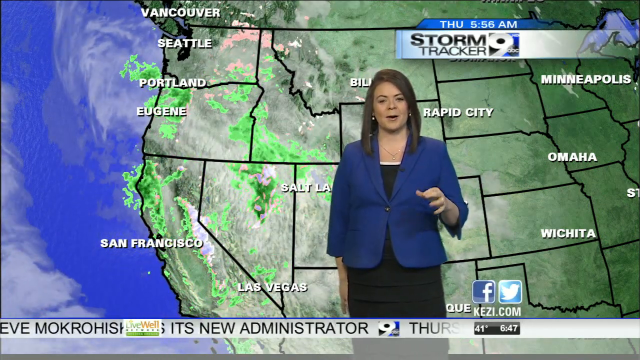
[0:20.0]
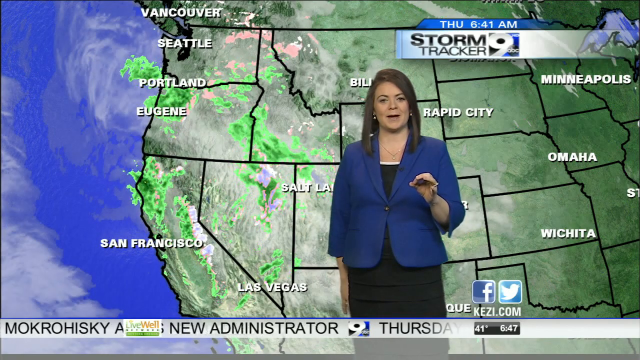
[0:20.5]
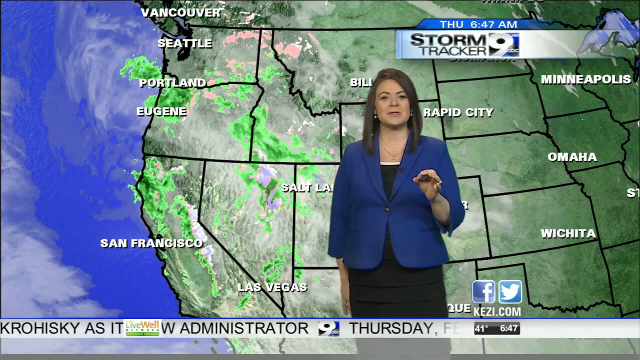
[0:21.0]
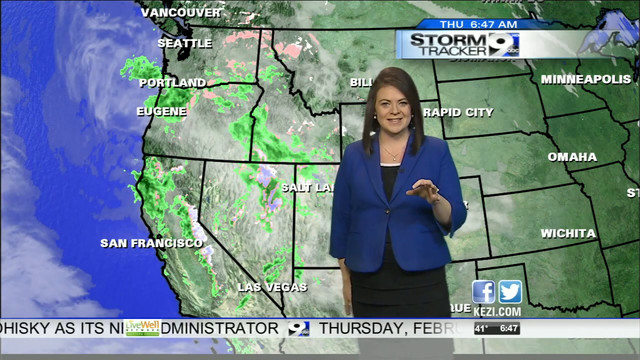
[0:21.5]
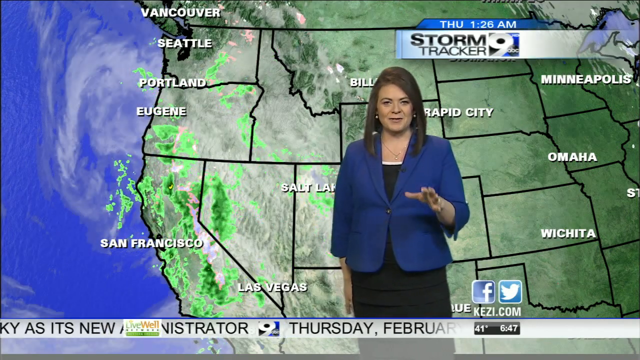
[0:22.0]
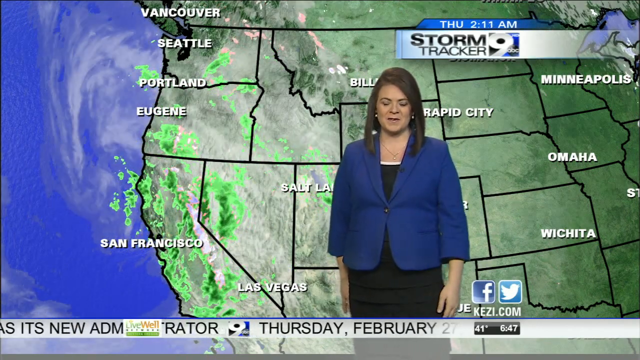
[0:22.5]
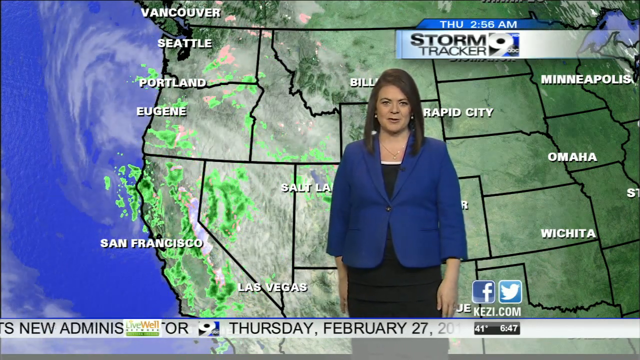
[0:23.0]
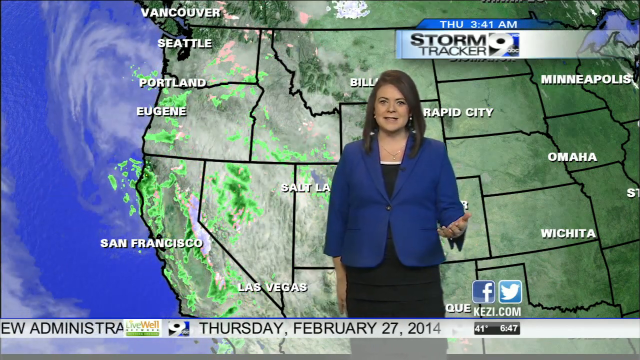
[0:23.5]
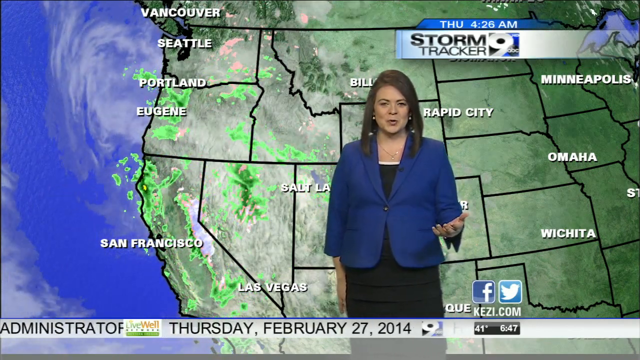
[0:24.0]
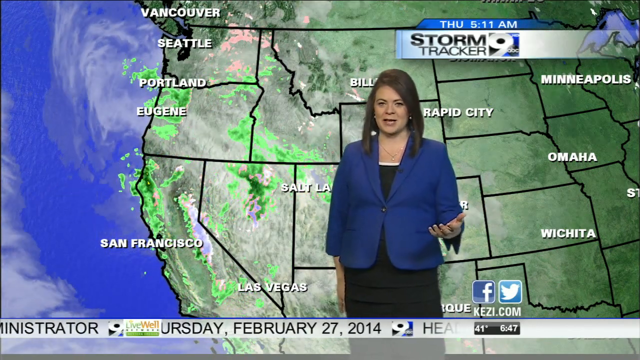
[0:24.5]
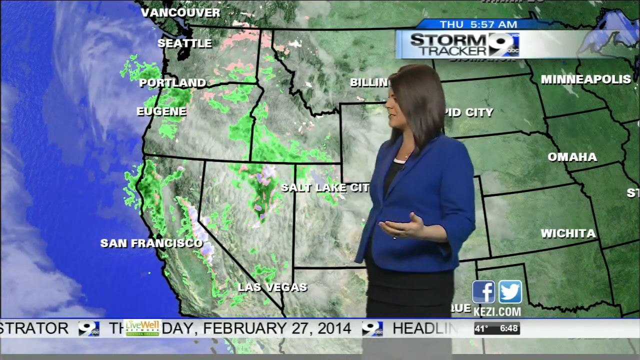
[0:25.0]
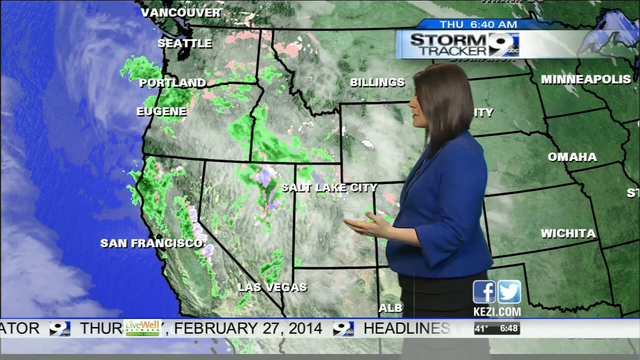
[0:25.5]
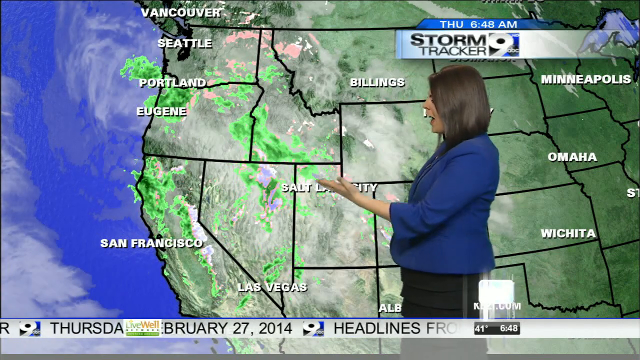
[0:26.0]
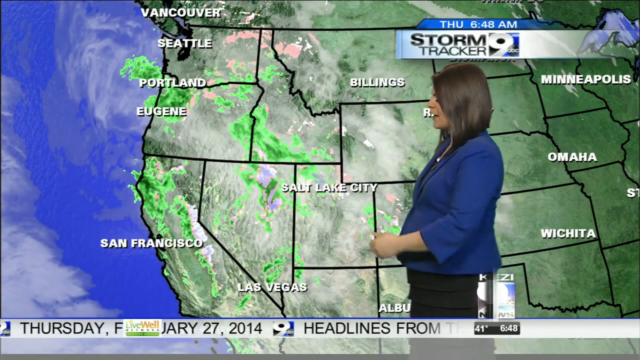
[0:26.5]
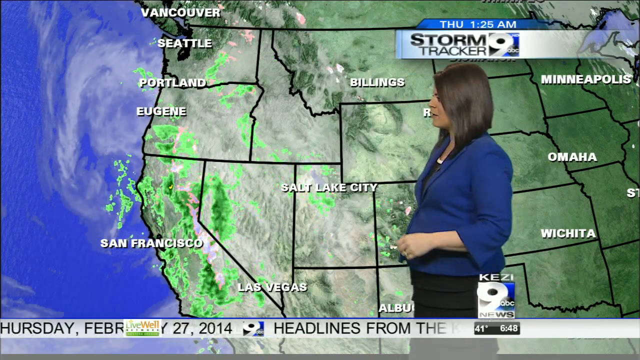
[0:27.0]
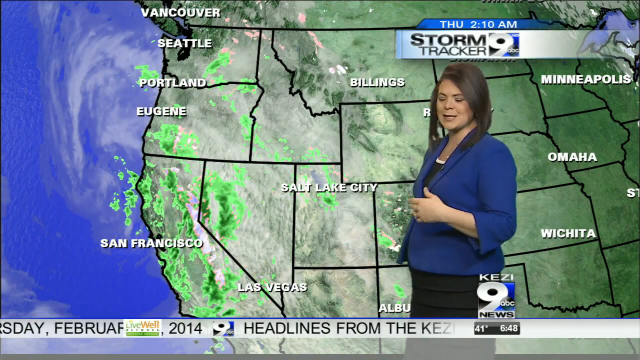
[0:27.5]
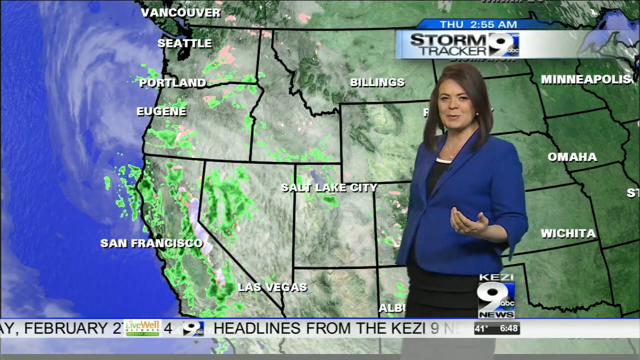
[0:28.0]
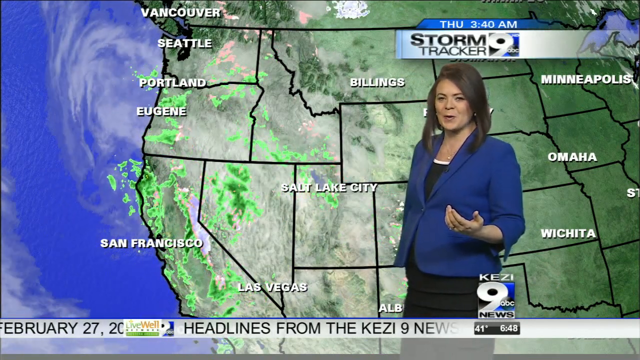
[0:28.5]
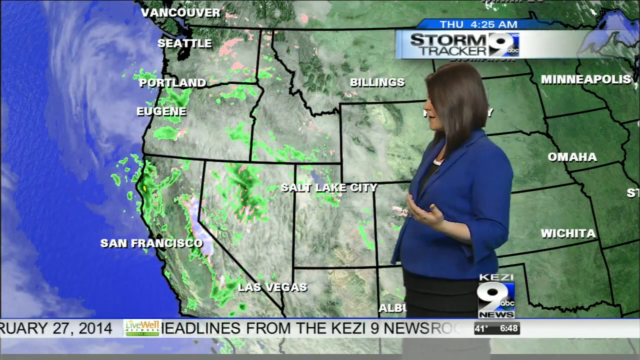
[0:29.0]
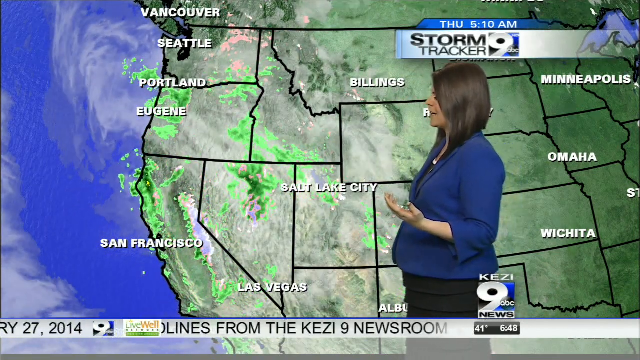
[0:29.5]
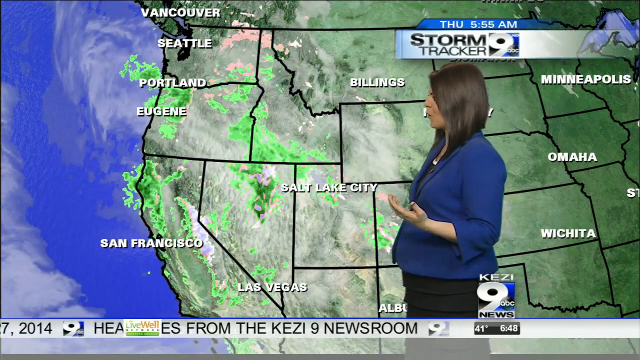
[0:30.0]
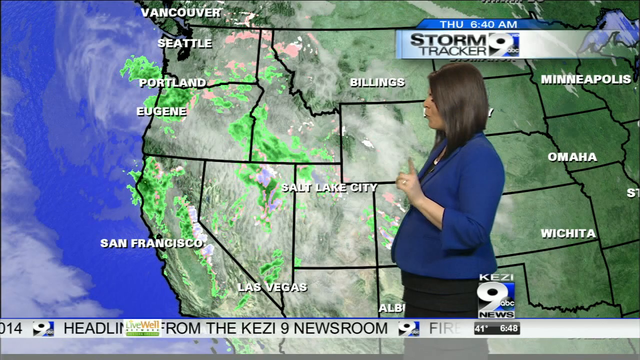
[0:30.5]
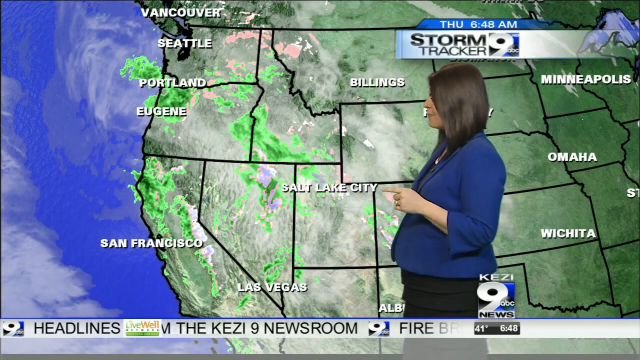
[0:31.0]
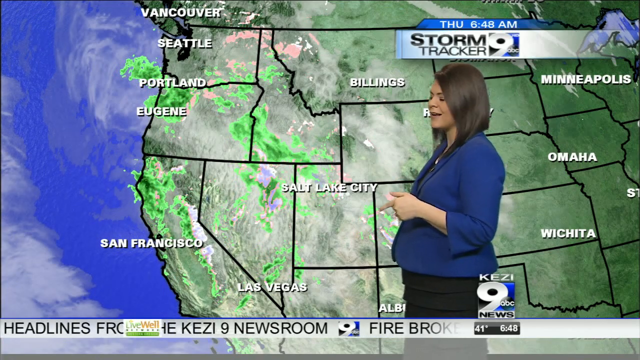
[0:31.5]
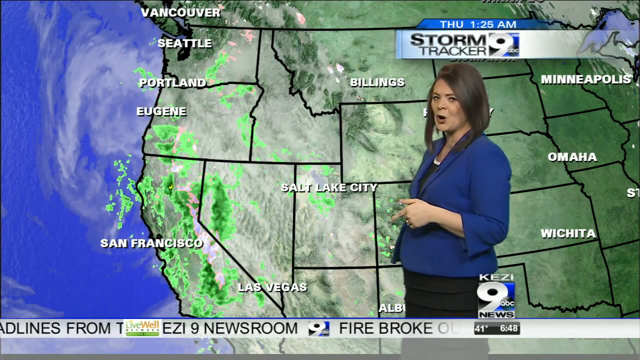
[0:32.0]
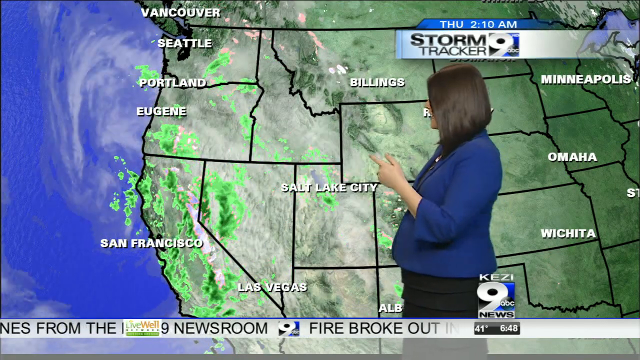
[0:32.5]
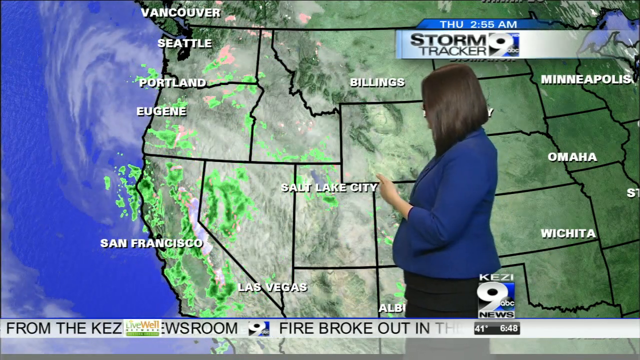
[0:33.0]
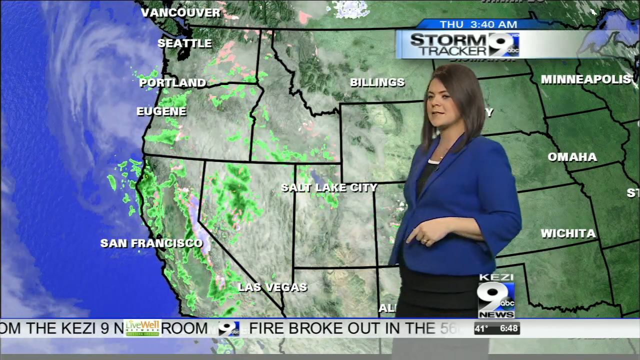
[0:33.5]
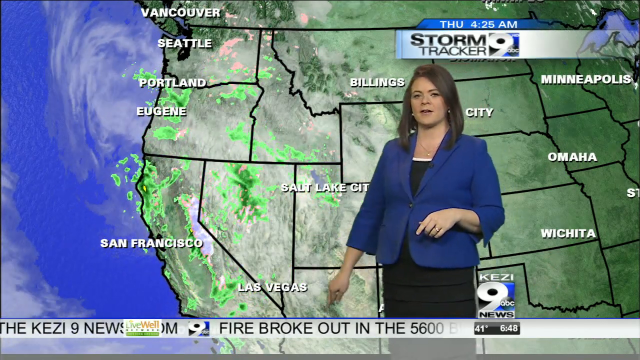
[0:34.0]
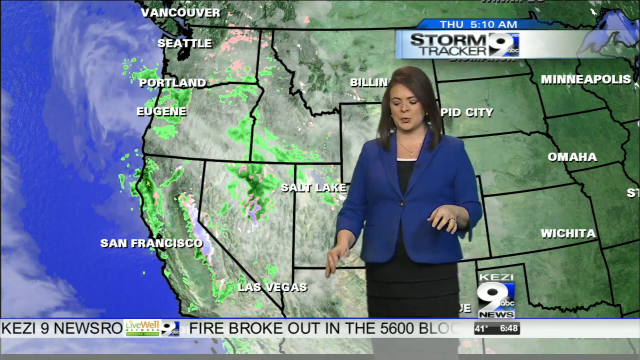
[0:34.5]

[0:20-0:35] A meteorologist at a news station talks about the weather activity displayed on a screen behind her. In the upper right-hand corner the screen reads "Storm Tracker" and "9ABC" for the affiliate, and the 9ABC news branding appears in three different places in the video. The meteorologist, a young woman with long brown hair, wears a blue suit-jacket type of top with a black dress underneath. She talks toward the camera, then turns to look at the map behind her, which shows various storm effects on the radar over the San Francisco, California area. Below her, a set of headlines from the news station scrolls by, apparently on a loop. One headline is about a fire breaking out, and the others give the date and general information. The weather graphic behind her is a green map of the United States, with blue for the water, white for clouds, and green, yellow and red coloring for the intensity of the storm.